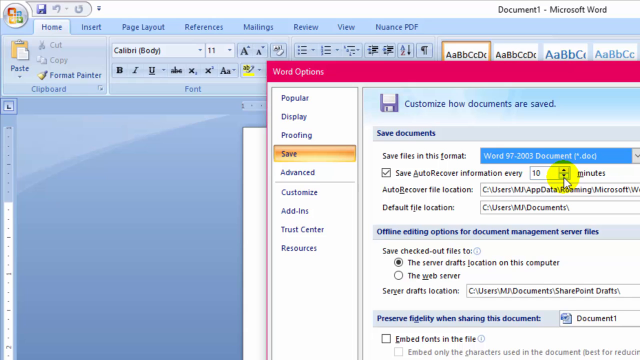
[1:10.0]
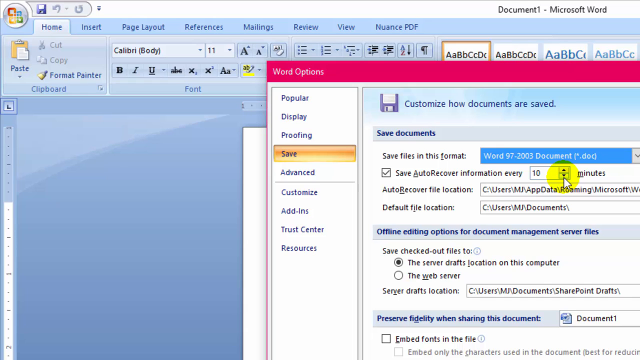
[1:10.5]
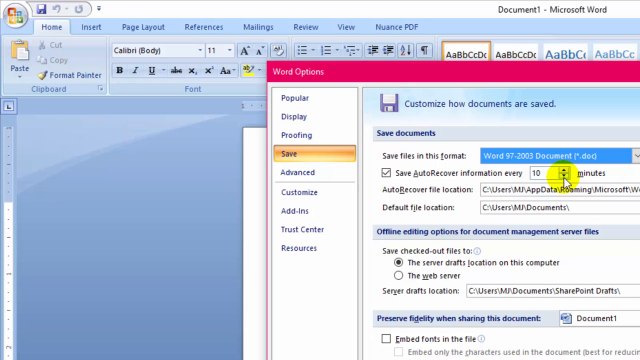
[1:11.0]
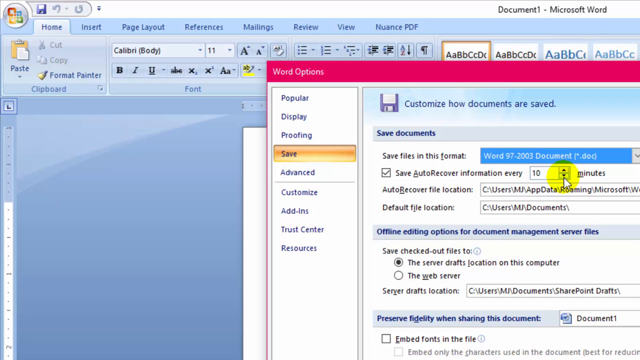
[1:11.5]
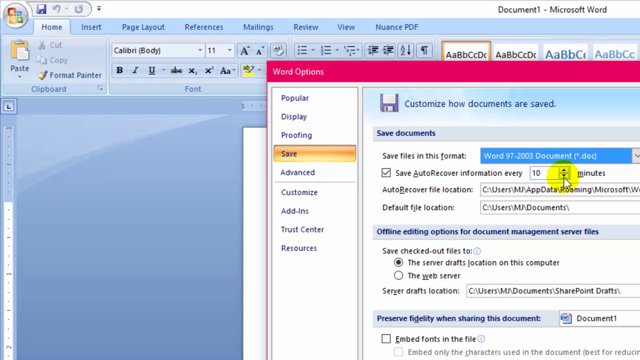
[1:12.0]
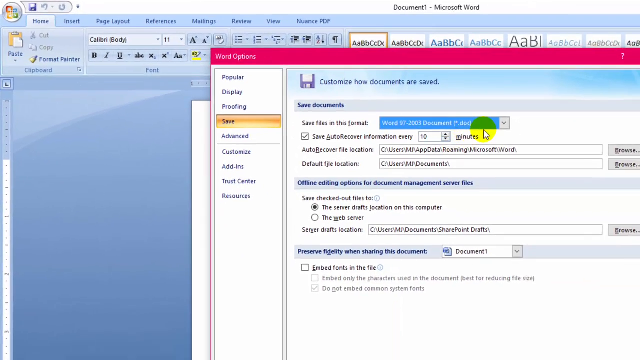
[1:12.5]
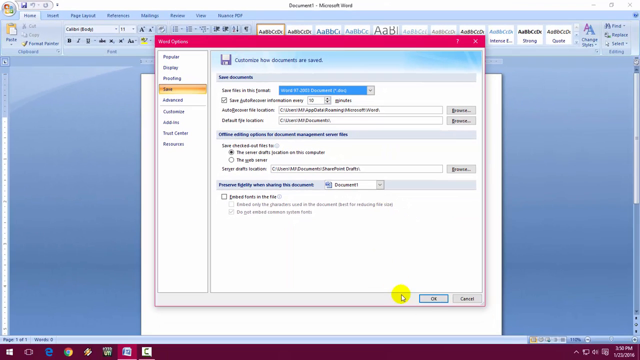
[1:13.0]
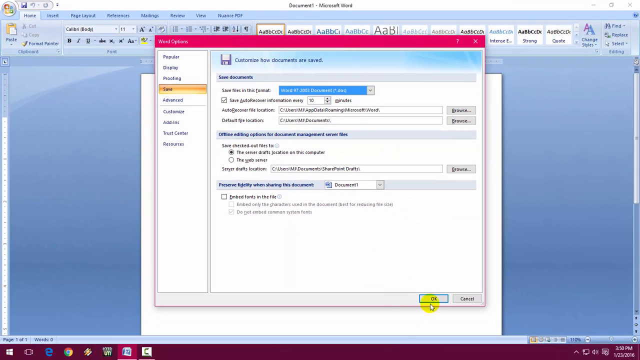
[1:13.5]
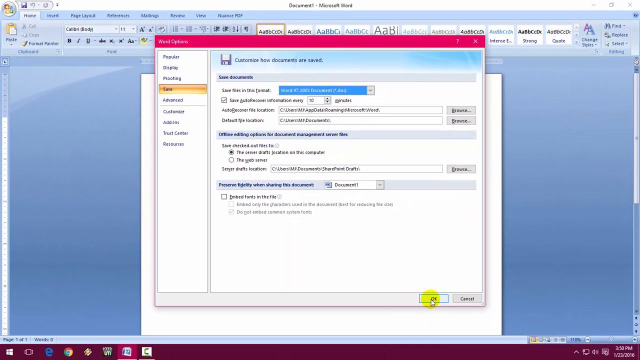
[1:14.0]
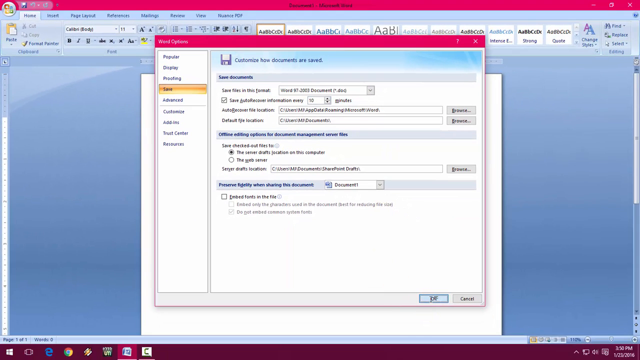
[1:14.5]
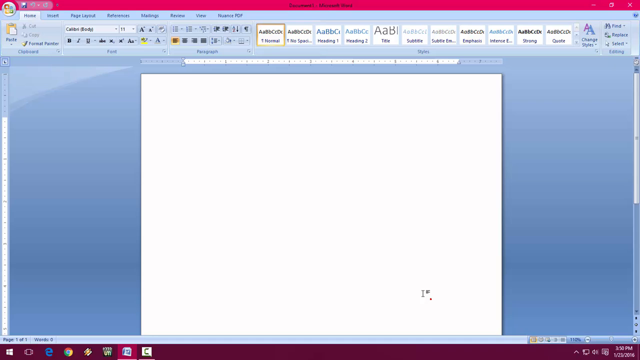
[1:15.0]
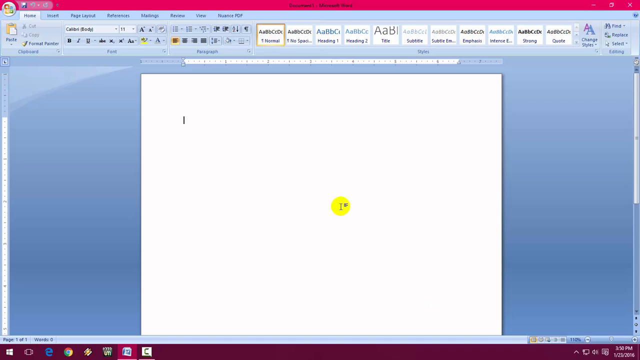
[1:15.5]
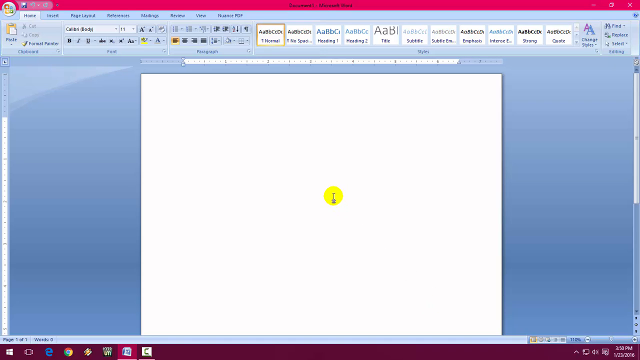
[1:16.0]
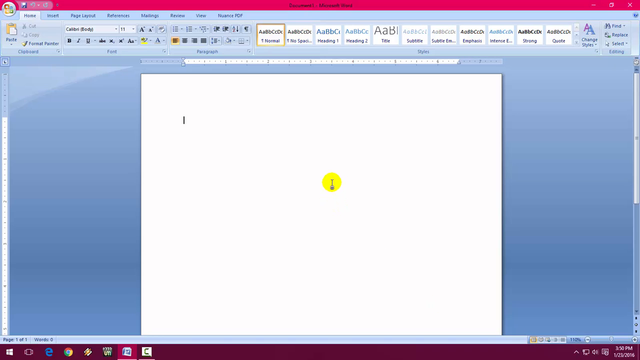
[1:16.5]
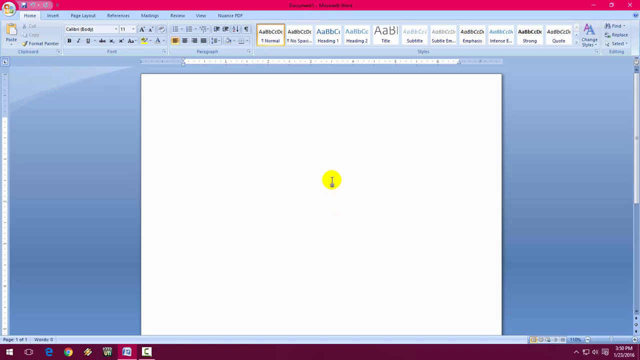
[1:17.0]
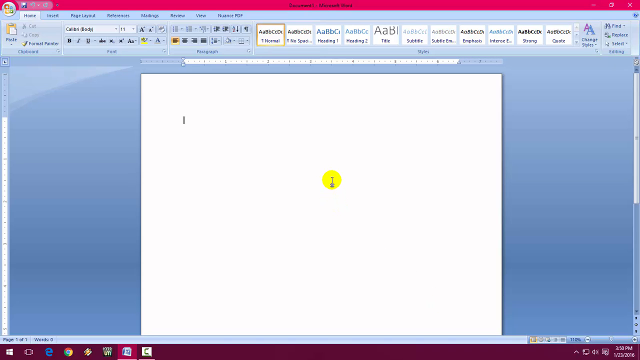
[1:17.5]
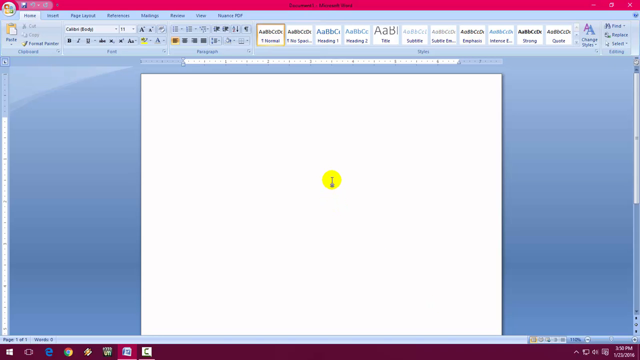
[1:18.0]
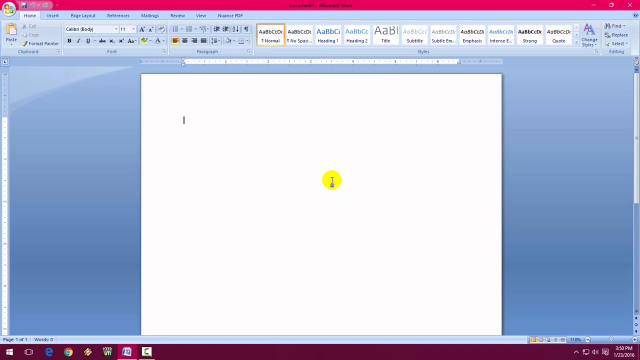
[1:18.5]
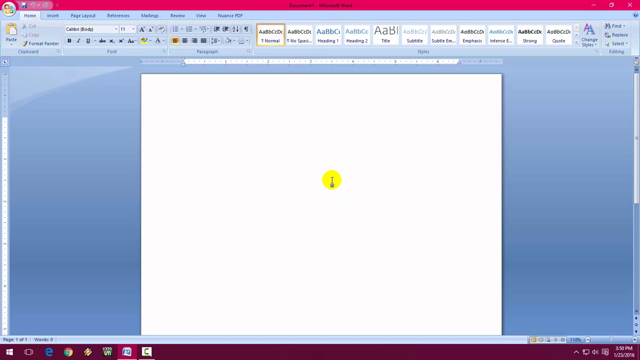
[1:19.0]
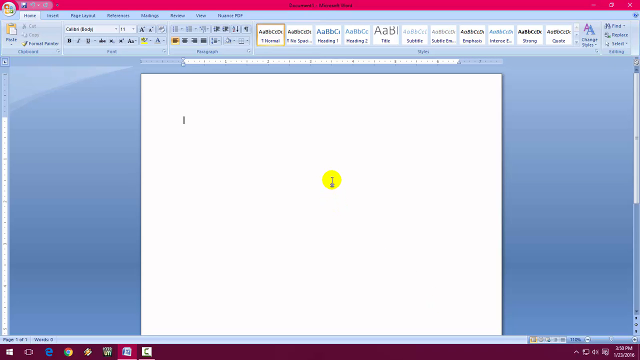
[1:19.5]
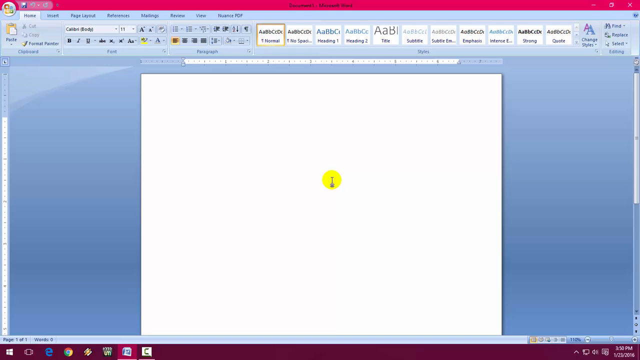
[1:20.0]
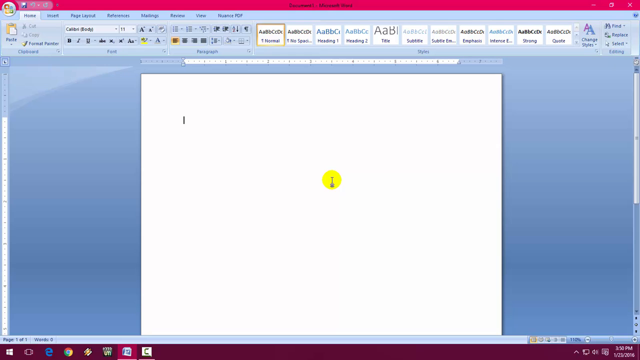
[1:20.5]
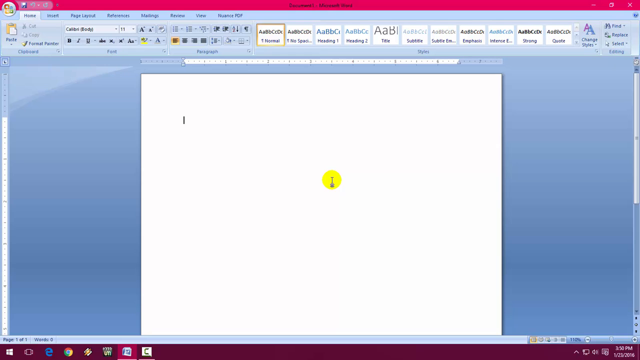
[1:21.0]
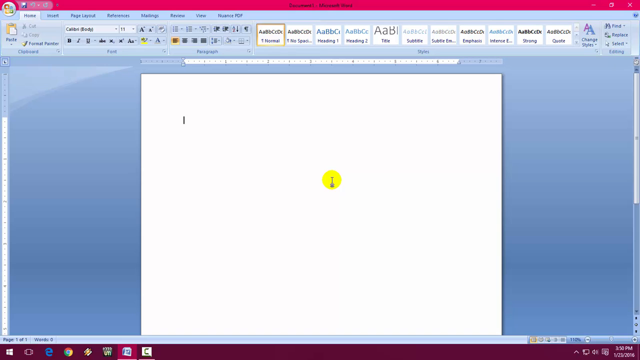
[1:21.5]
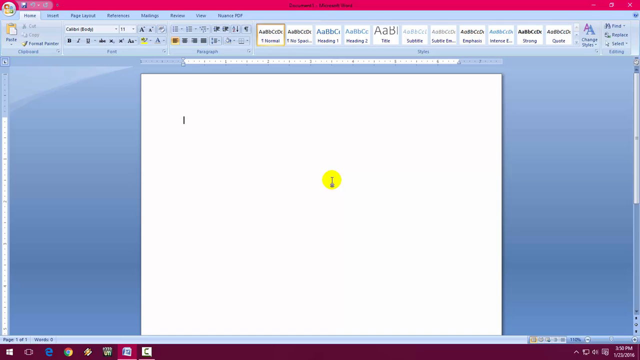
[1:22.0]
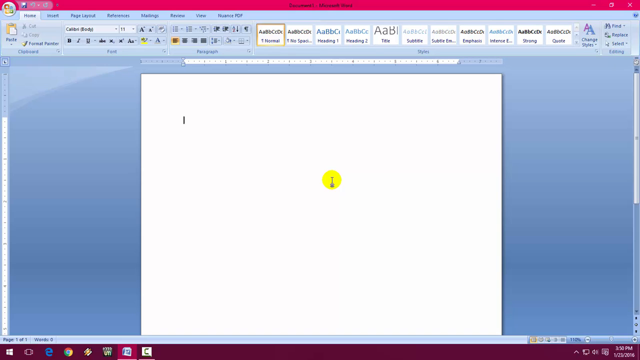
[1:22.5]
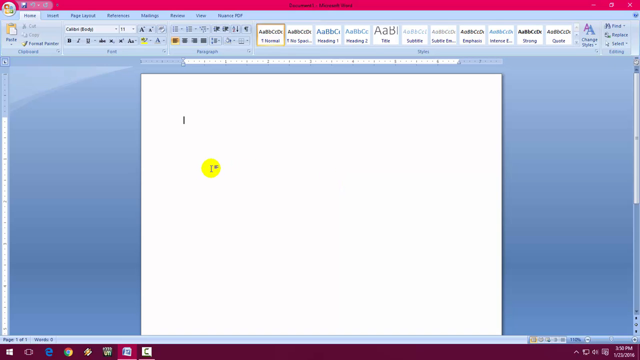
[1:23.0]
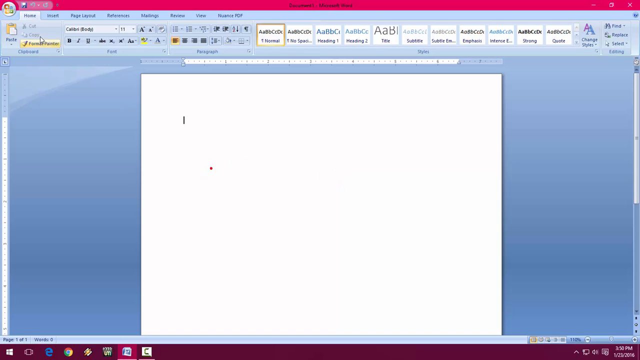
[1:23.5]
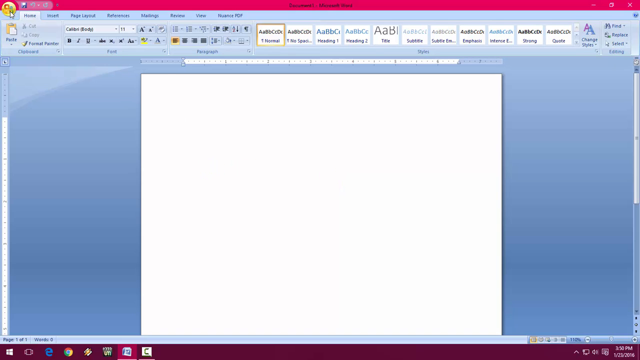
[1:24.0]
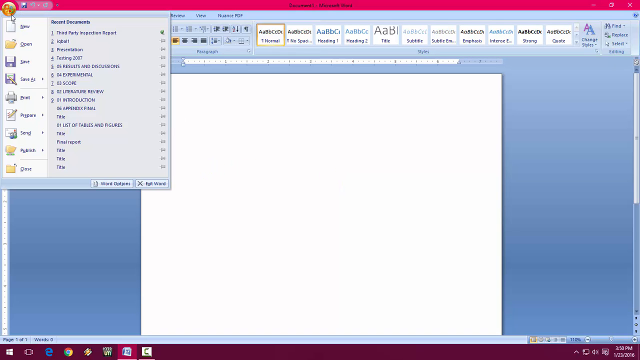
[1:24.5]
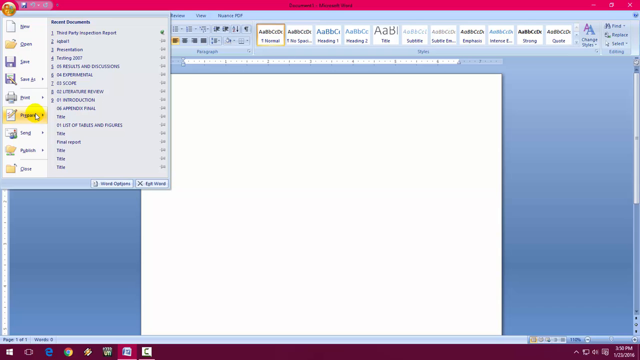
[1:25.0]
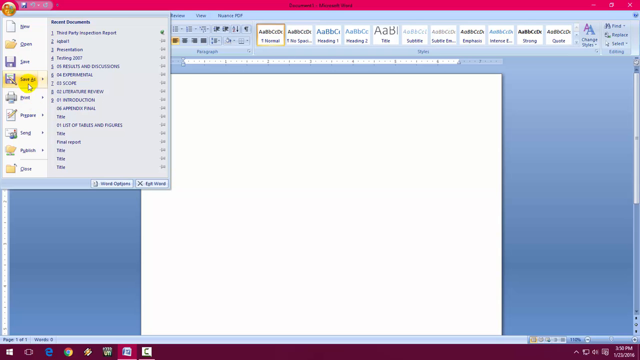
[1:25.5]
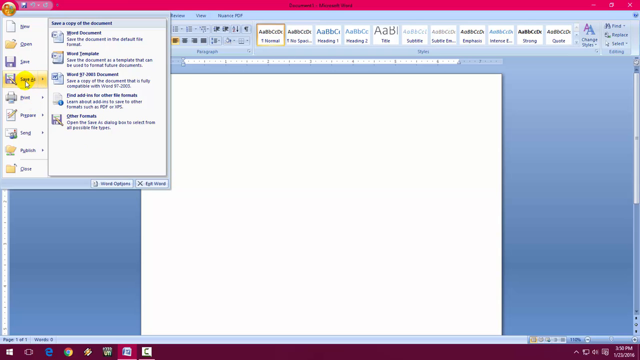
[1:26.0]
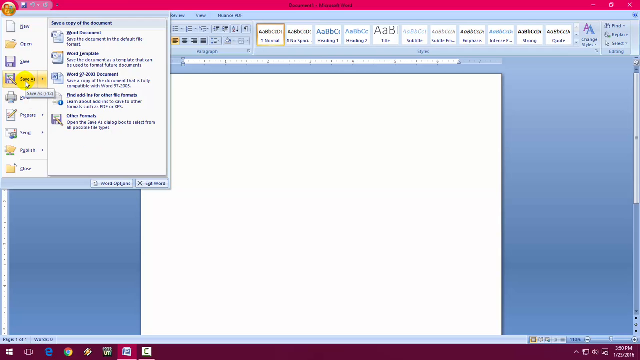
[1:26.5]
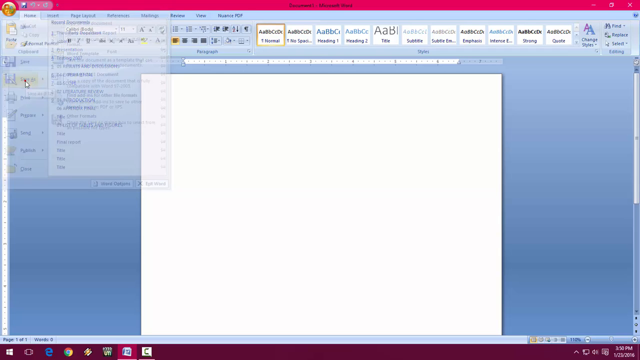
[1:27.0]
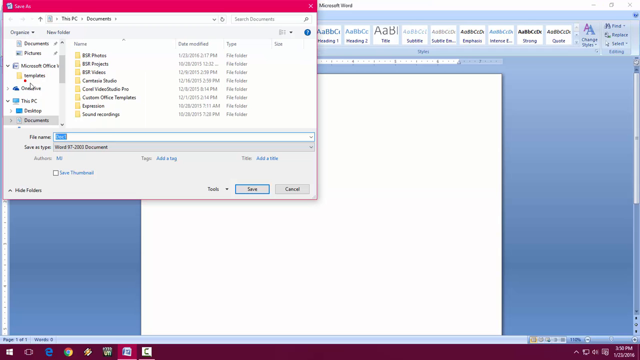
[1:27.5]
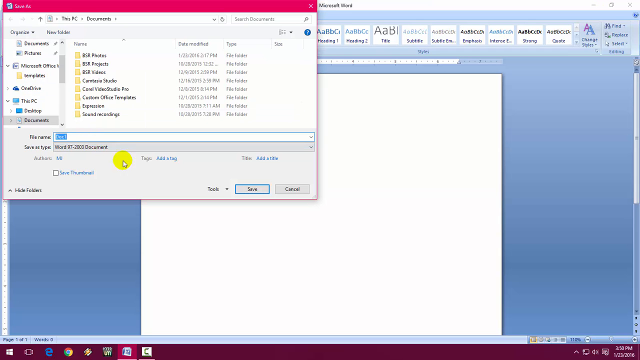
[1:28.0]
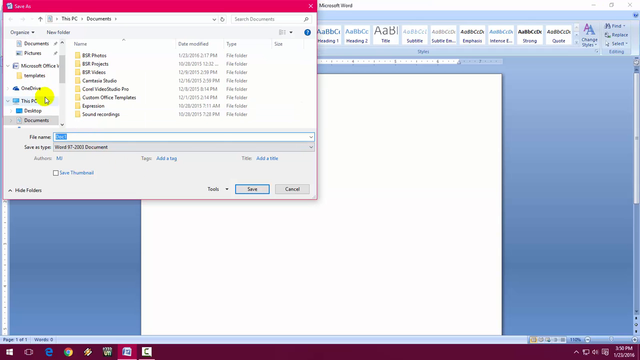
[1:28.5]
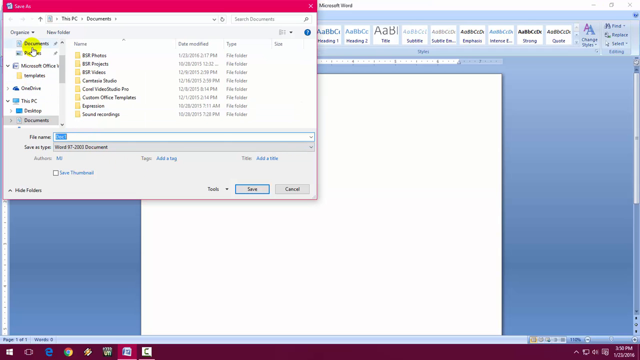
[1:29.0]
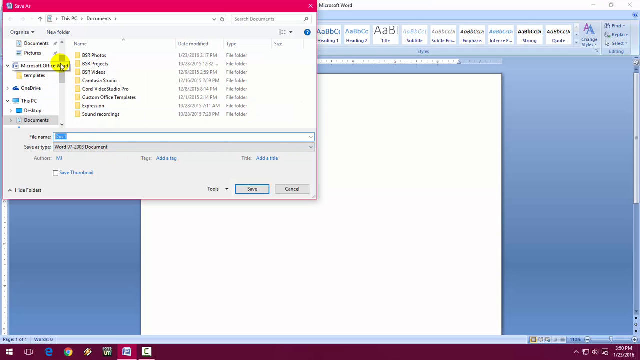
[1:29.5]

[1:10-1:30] The user is still in the Save section of the Word Options window, with Word 97-2003 Document chosen as the save format instead of the original setting. The user clicks the OK button in the lower right of the window, the setting is saved, and the blank document is shown. The user then clicks the Office 365 option in the upper left of the screen again, goes to the Save As option, clicks it and goes into a specific option for saving the file. The user seems to be looking for something in particular, but what it is is not shown.